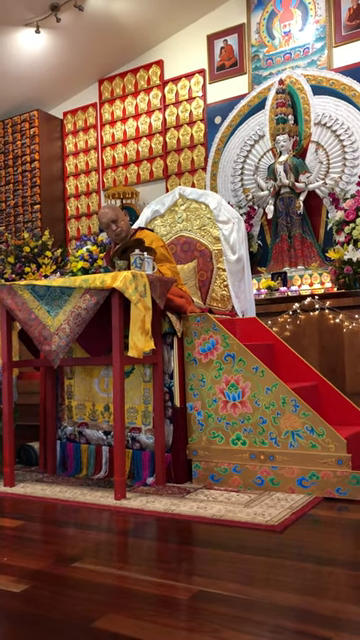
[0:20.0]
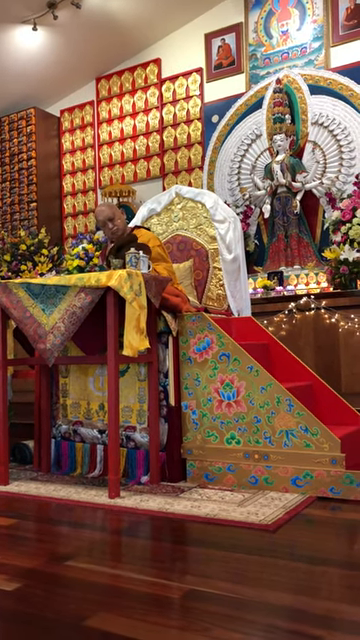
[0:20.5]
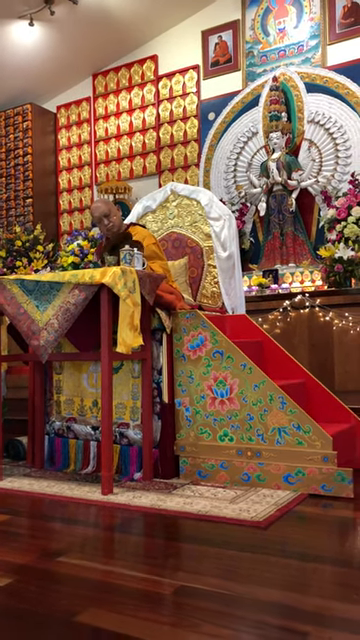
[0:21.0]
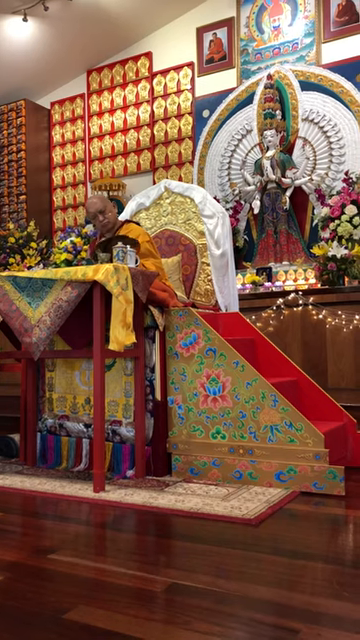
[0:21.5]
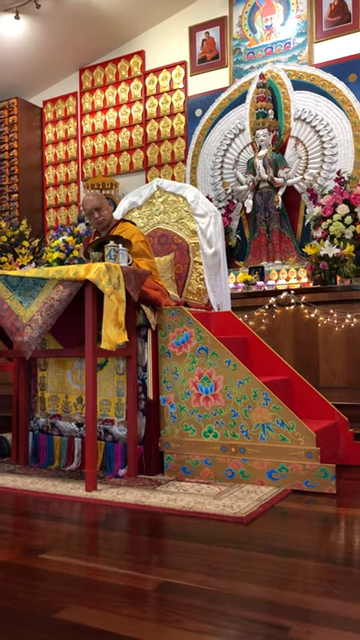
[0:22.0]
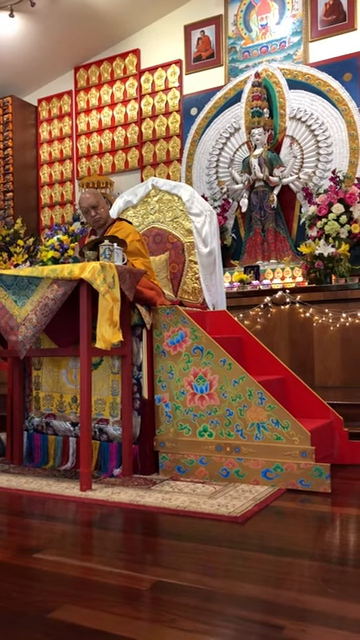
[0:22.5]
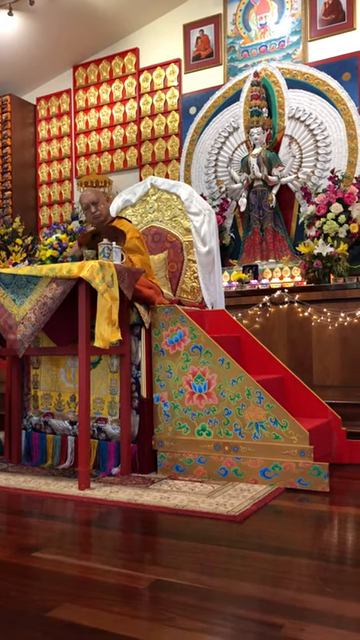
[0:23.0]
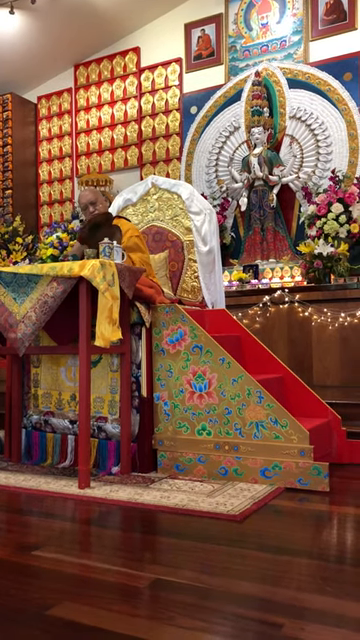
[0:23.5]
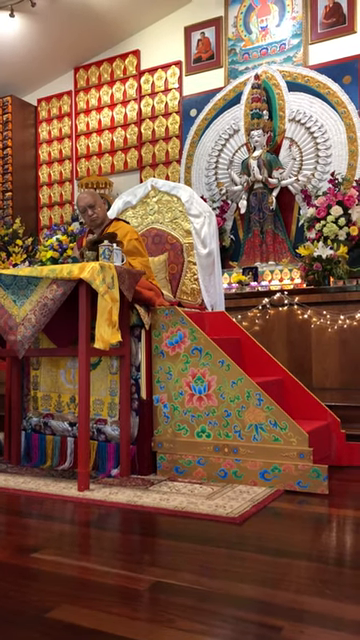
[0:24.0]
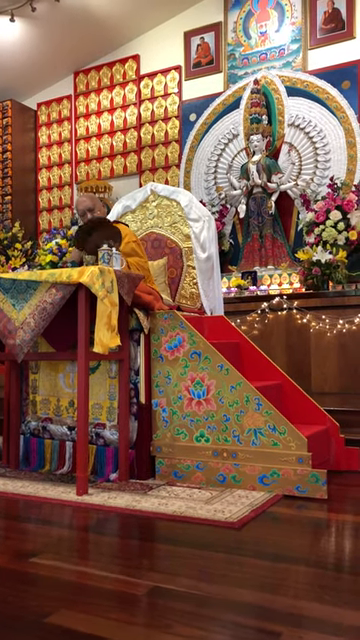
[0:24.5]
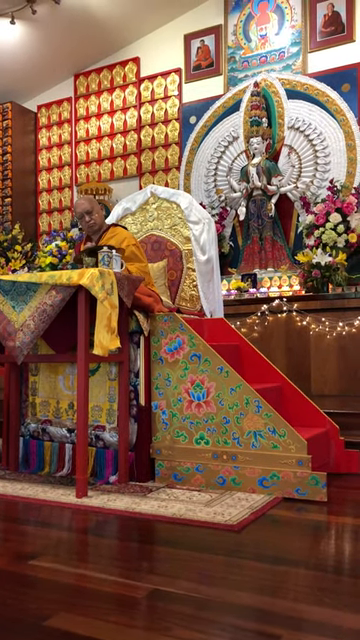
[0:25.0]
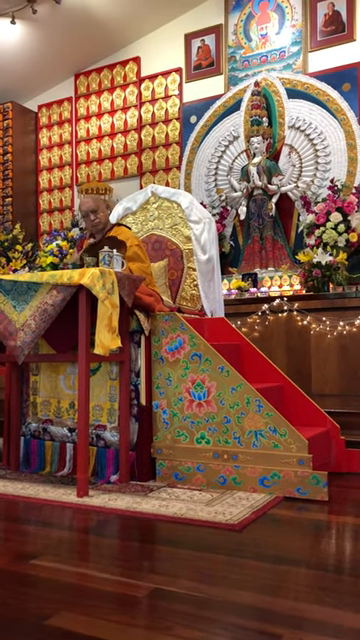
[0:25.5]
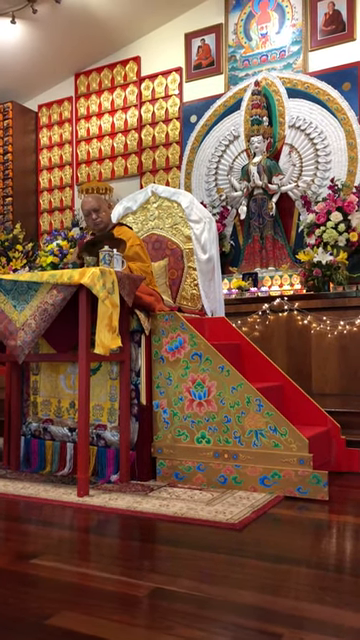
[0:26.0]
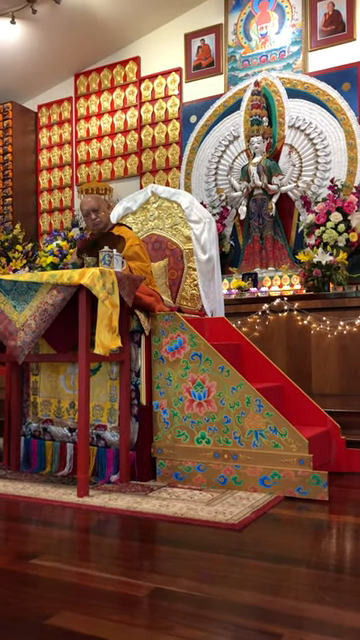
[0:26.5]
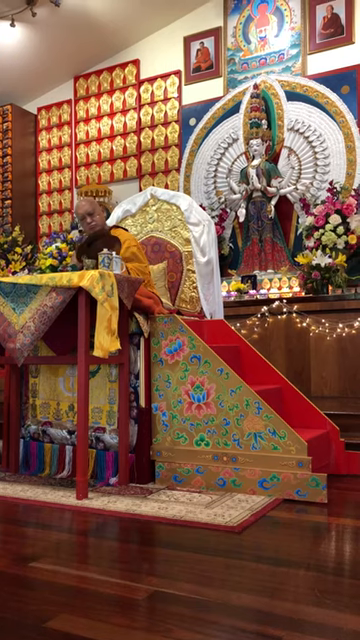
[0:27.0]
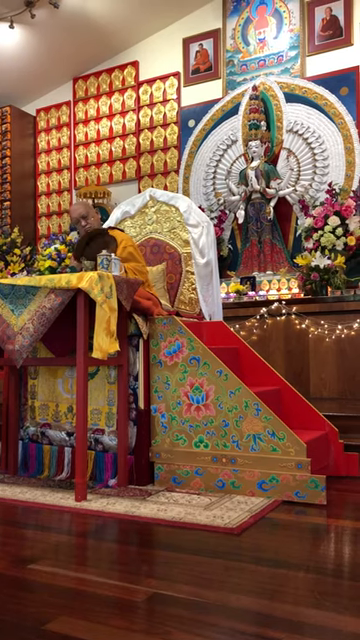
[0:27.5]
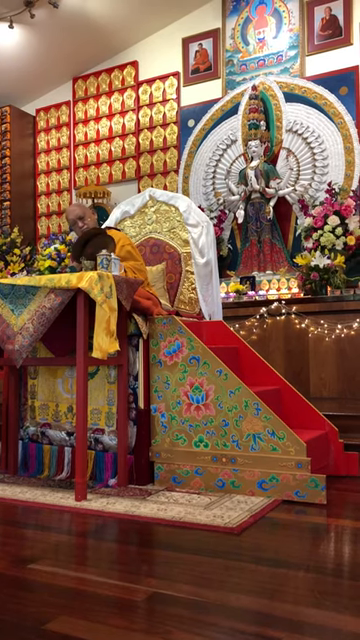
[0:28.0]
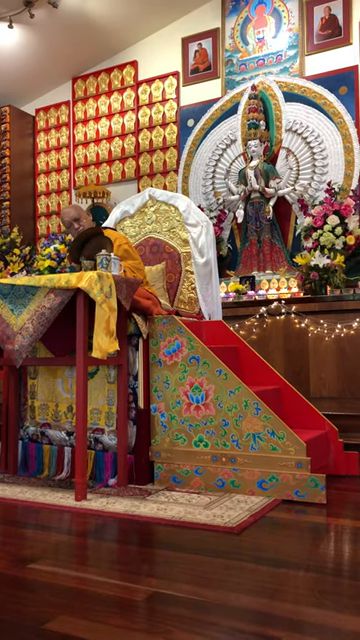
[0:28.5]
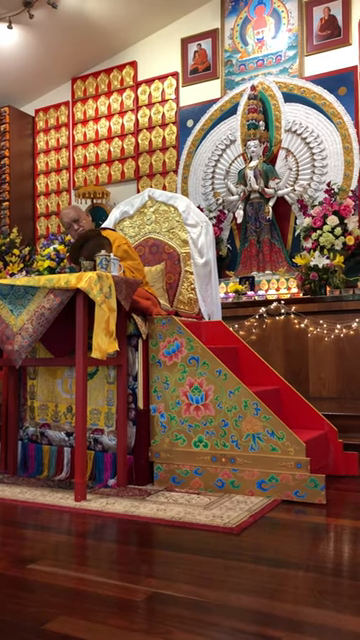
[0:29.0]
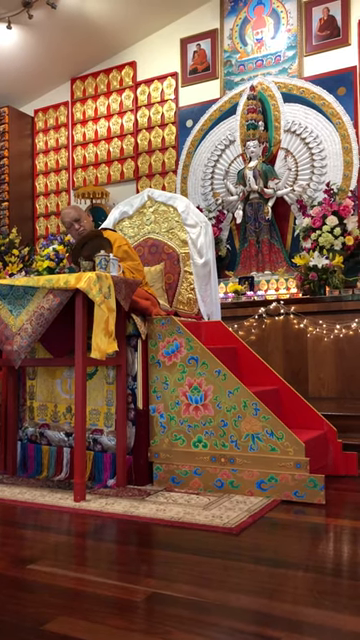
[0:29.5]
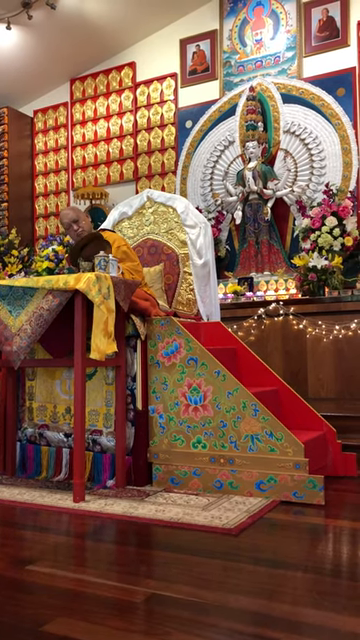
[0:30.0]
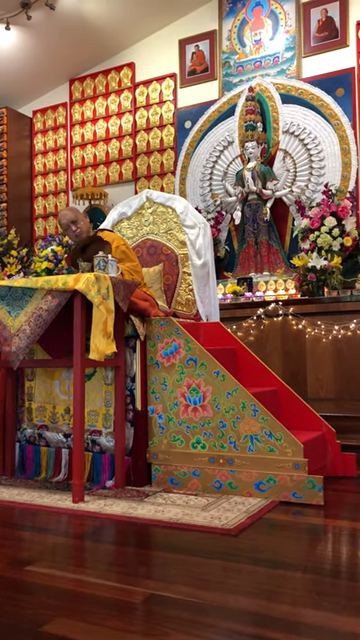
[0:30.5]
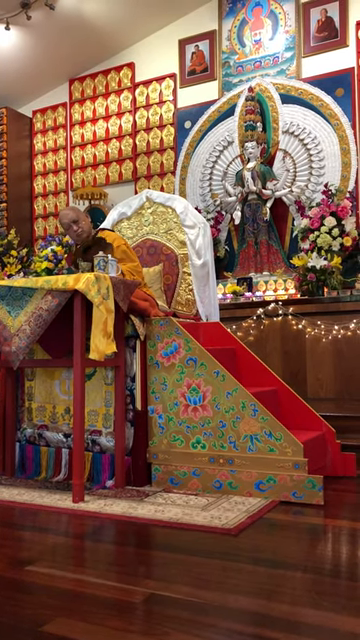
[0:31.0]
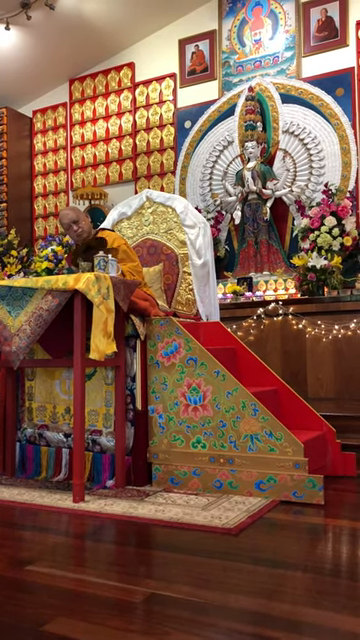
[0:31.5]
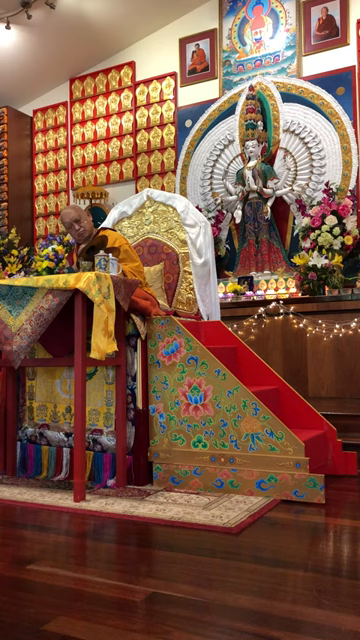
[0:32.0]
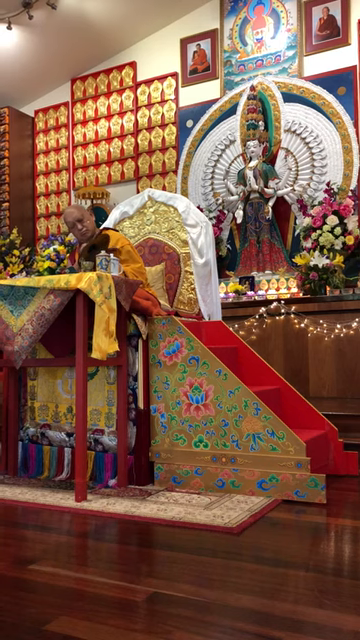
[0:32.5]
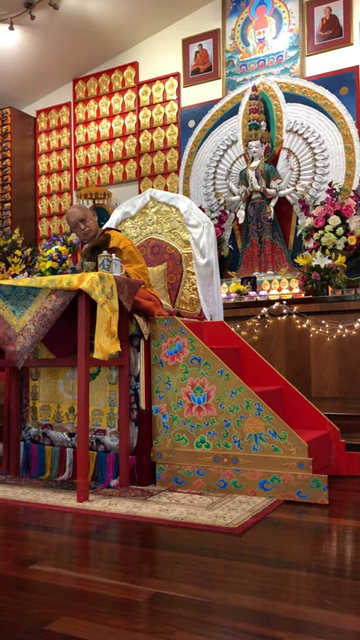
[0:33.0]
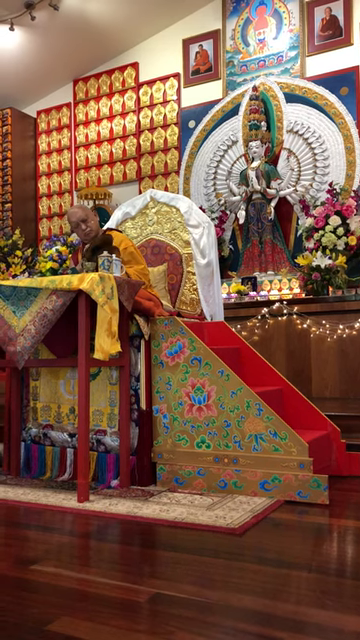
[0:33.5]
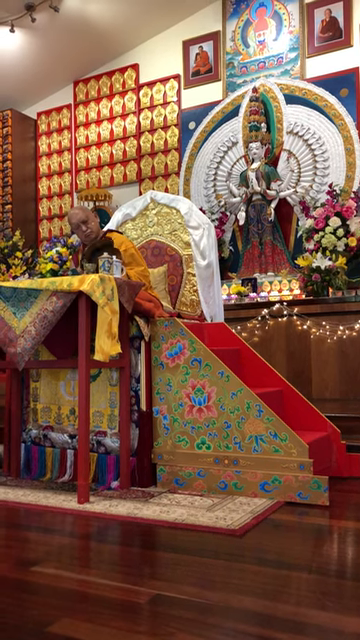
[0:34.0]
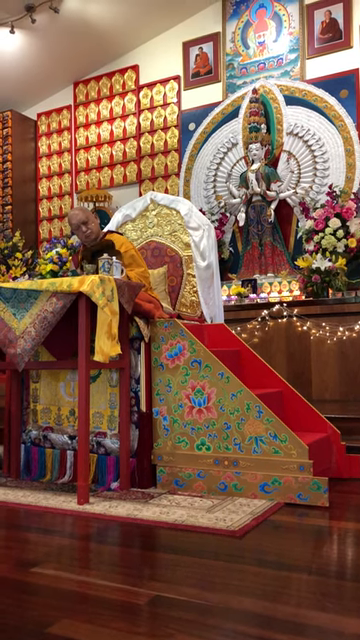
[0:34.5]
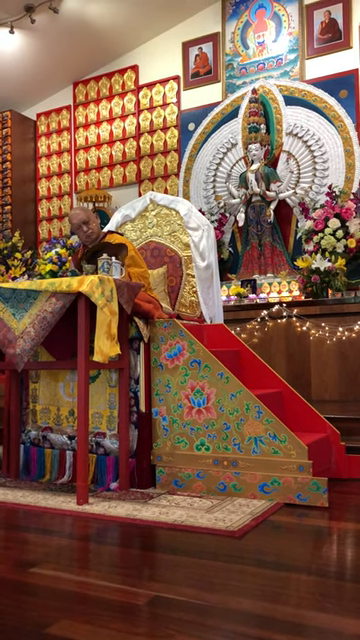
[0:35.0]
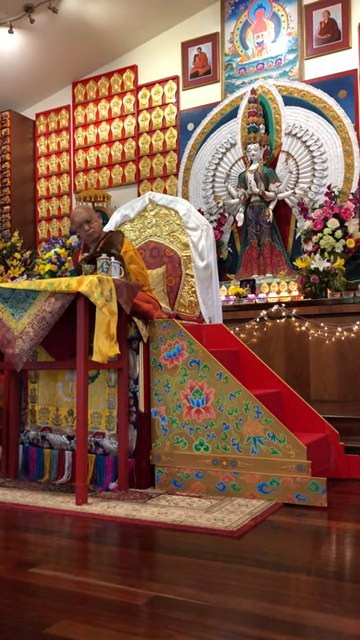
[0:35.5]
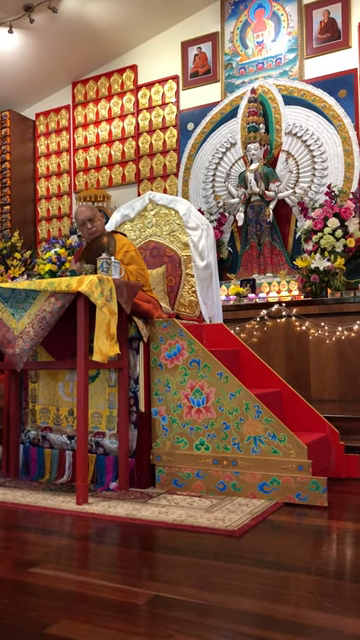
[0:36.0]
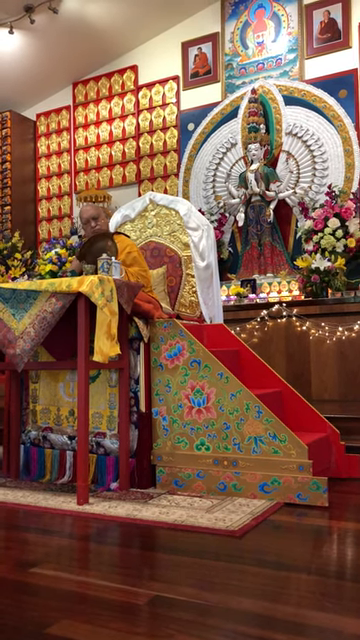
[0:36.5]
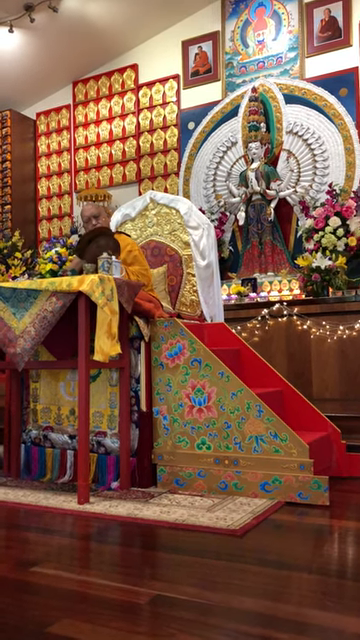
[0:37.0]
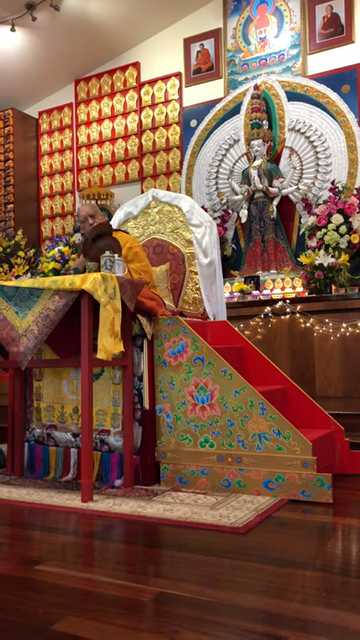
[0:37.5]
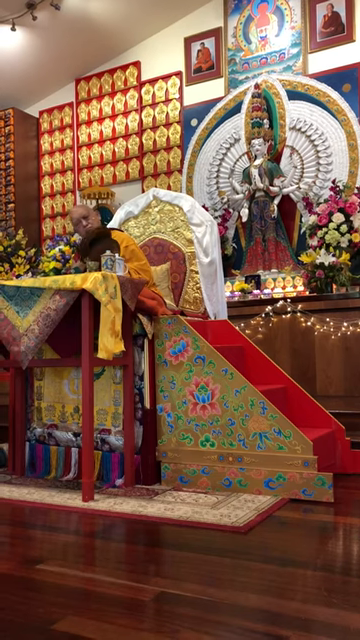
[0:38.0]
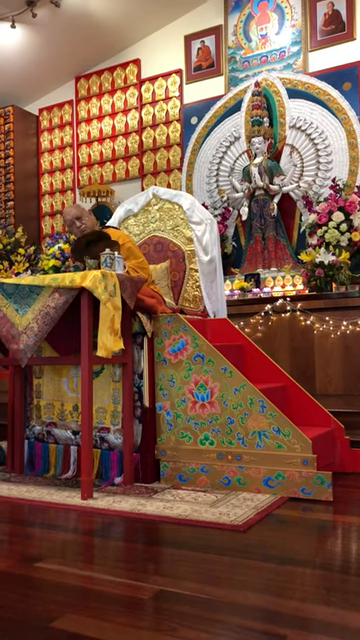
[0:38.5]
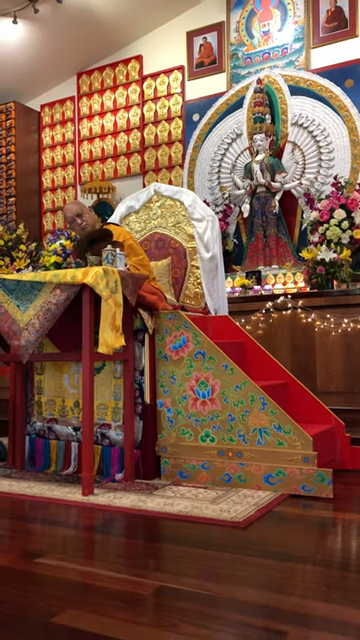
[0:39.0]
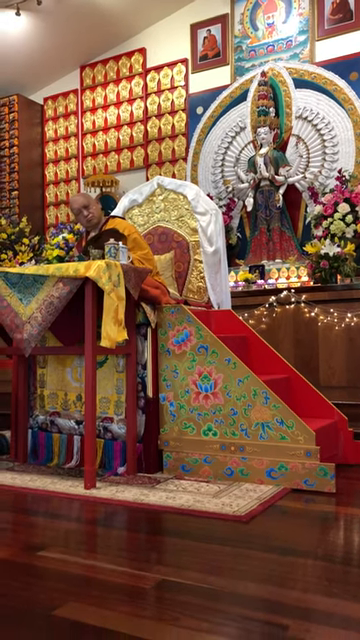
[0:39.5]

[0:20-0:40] In a religious setting, the back wall is covered in kind of religious icons, including a couple of photos of kind of Buddhist monks. A monk in an orange outfit is sat on a very grand golden throne. A small set of wooden steps allows him to get up onto the throne; the steps are a kind of deep red-orange colour with lotus flowers painted on the sides. There are some fairy lights on the back wall. In front of the monk is a very tall table covered in kind of silk scarves. He appears to have a couple of cymbals and shakes them together very gently, pauses, puts his ear to them, and then shakes them together for a bit longer, evidently as part of some kind of religious ritual.